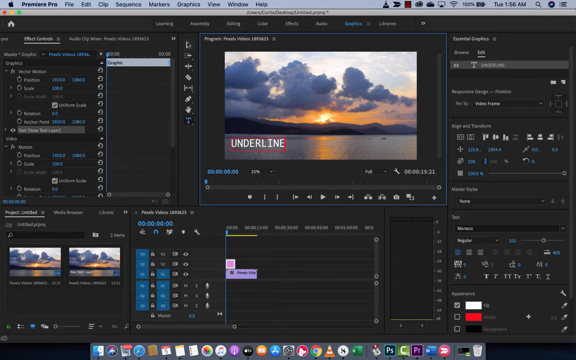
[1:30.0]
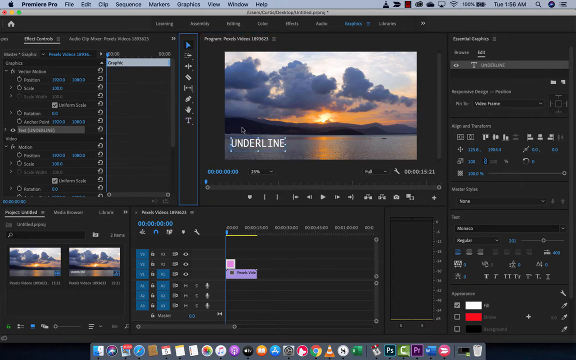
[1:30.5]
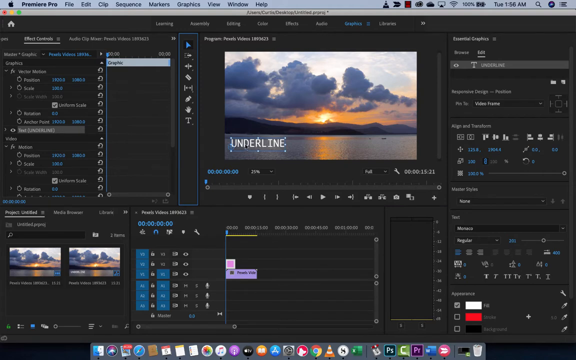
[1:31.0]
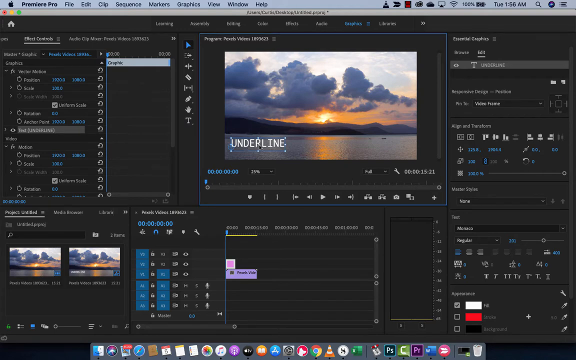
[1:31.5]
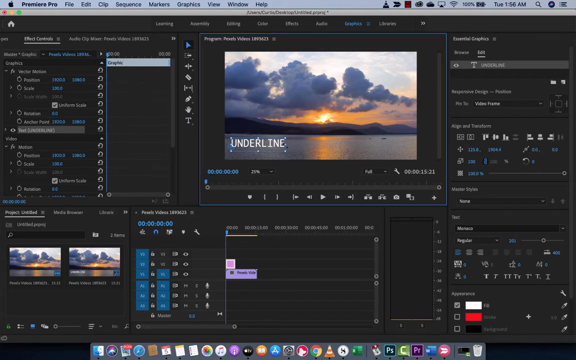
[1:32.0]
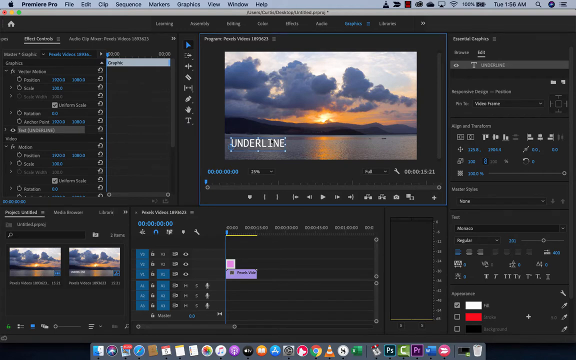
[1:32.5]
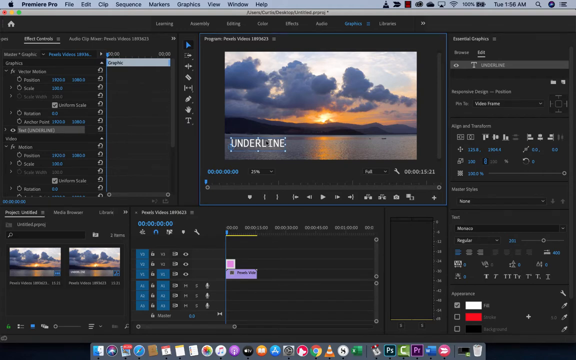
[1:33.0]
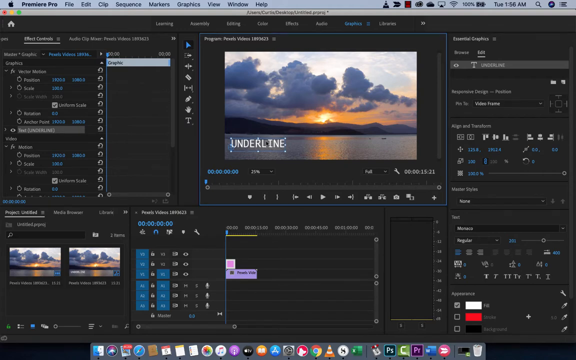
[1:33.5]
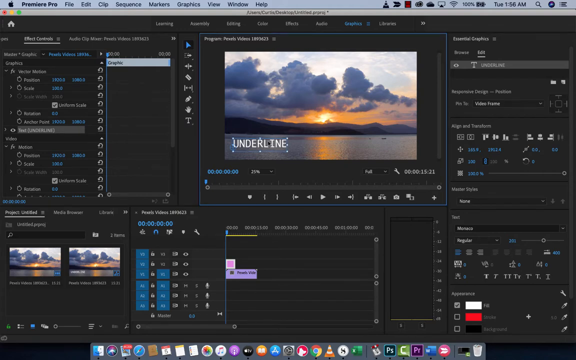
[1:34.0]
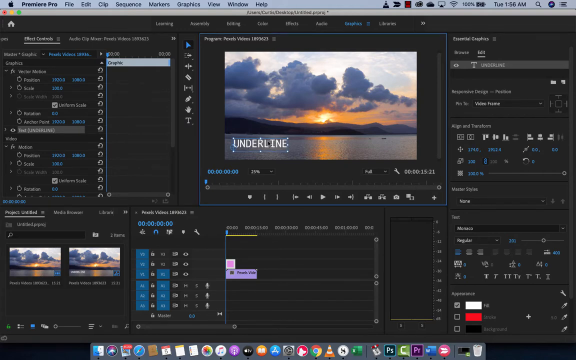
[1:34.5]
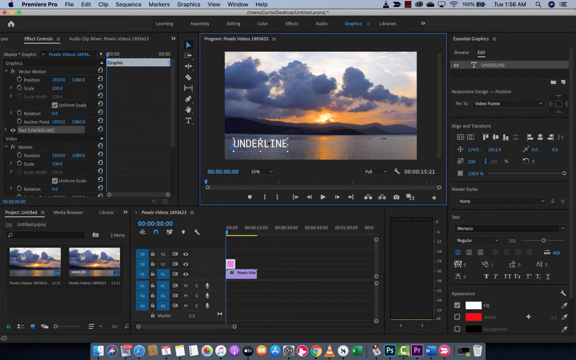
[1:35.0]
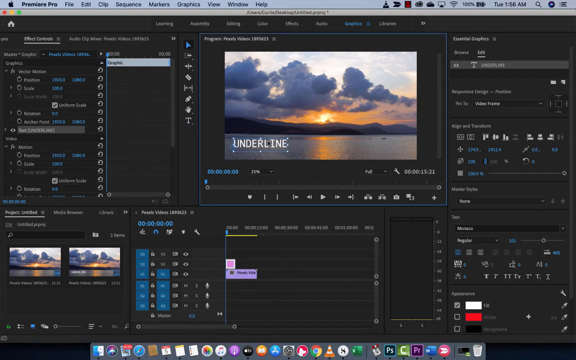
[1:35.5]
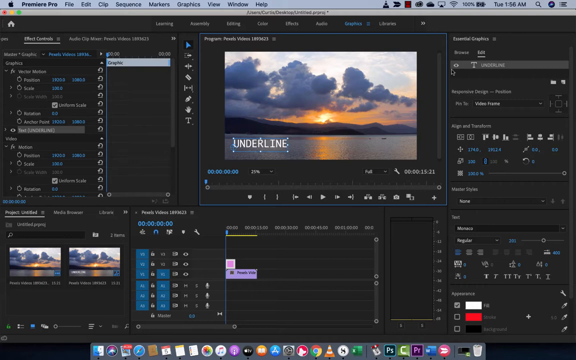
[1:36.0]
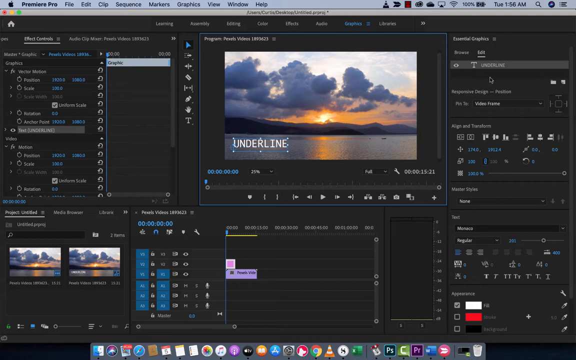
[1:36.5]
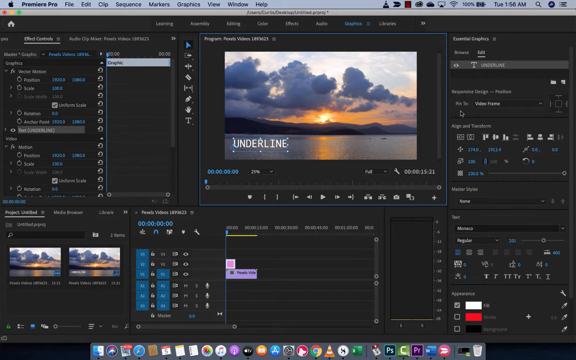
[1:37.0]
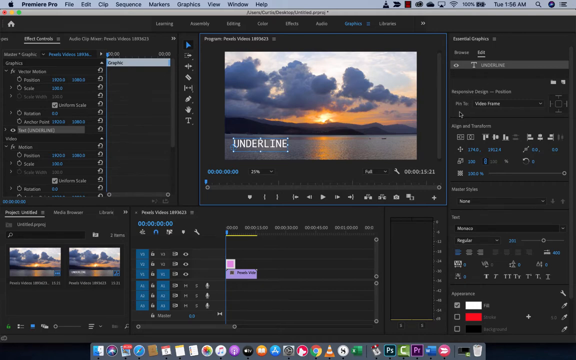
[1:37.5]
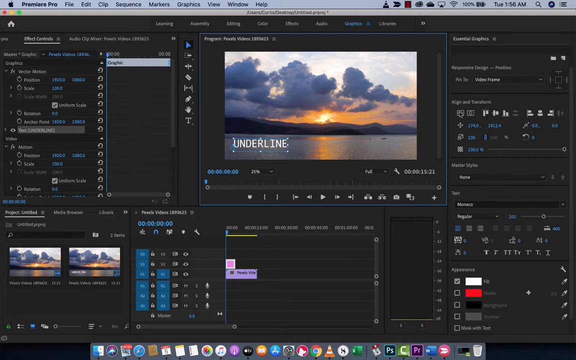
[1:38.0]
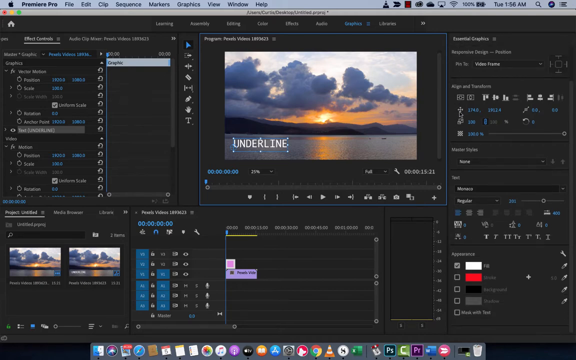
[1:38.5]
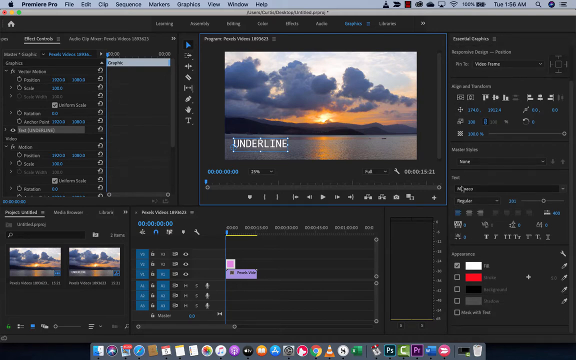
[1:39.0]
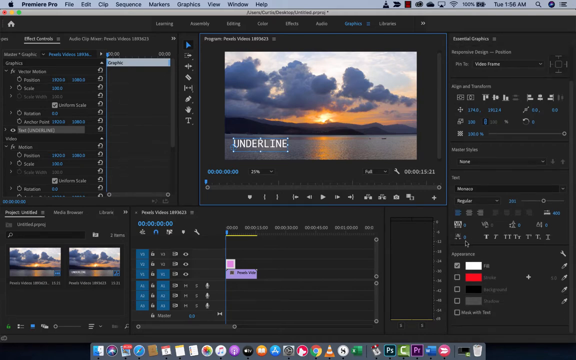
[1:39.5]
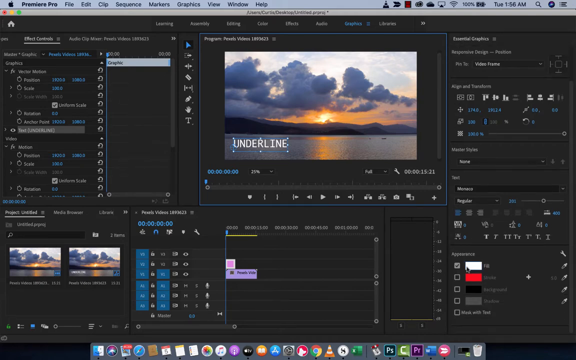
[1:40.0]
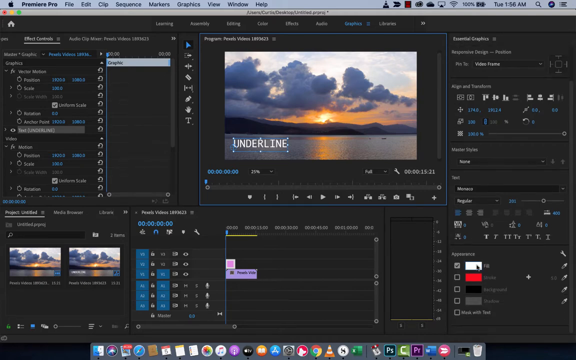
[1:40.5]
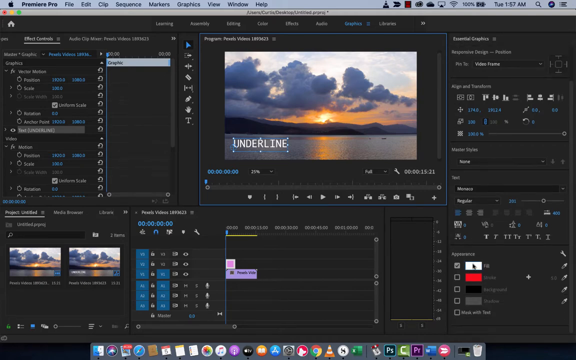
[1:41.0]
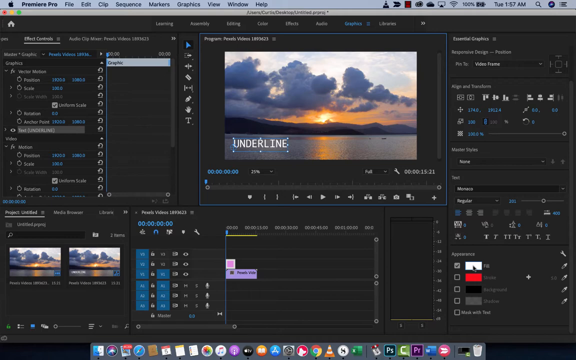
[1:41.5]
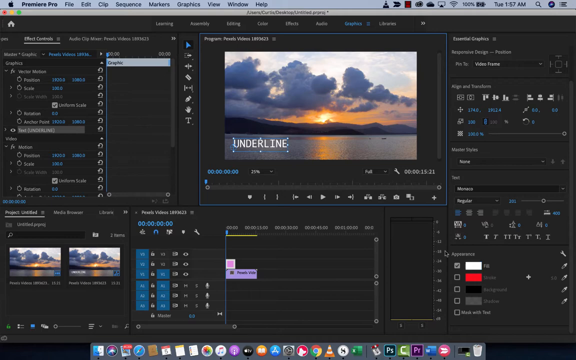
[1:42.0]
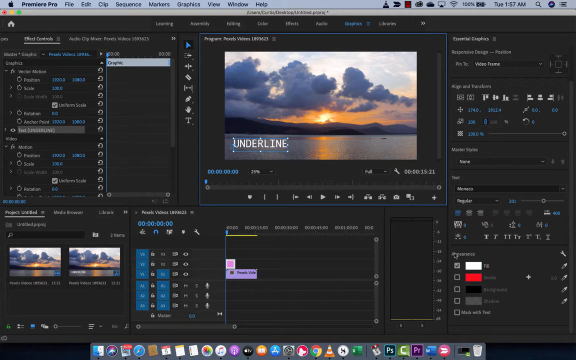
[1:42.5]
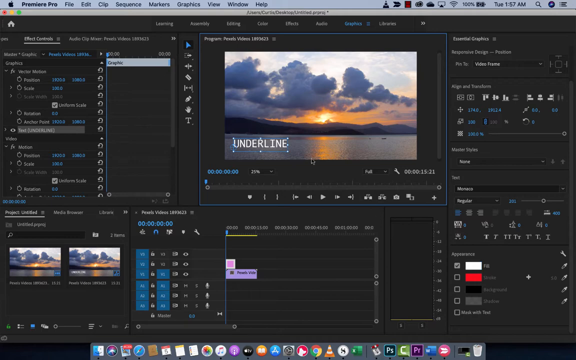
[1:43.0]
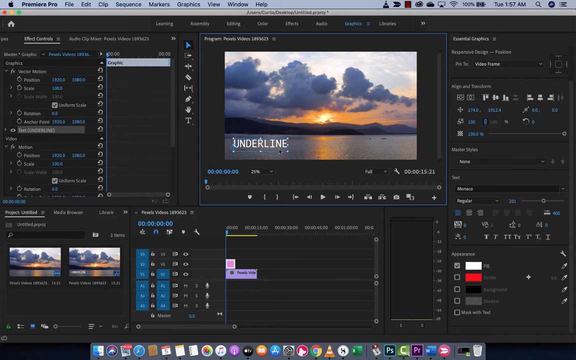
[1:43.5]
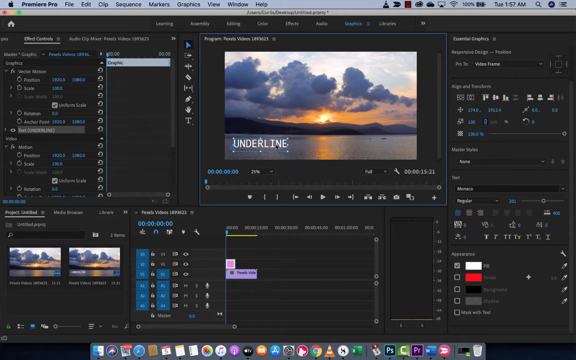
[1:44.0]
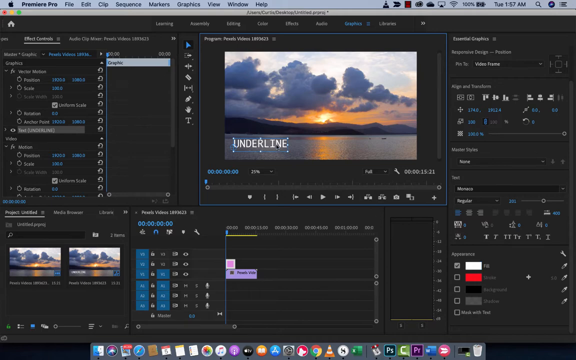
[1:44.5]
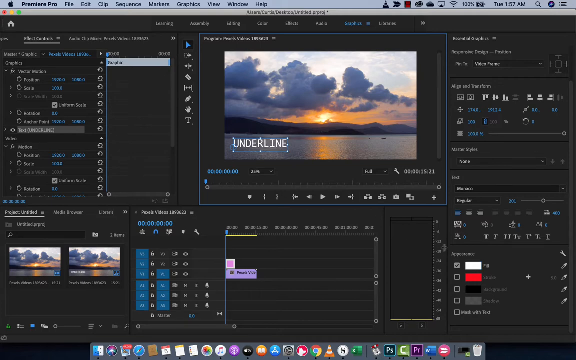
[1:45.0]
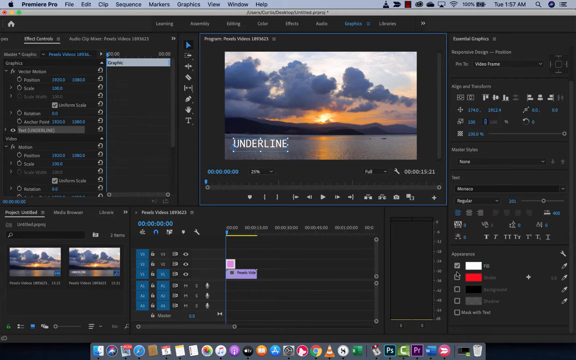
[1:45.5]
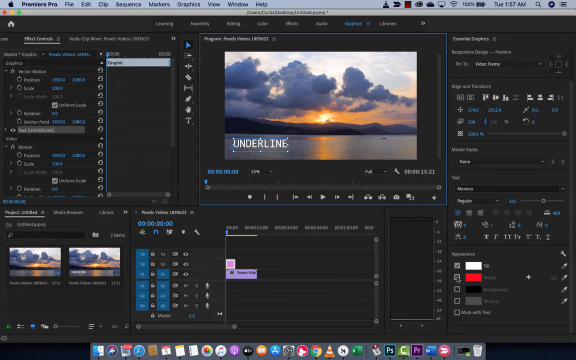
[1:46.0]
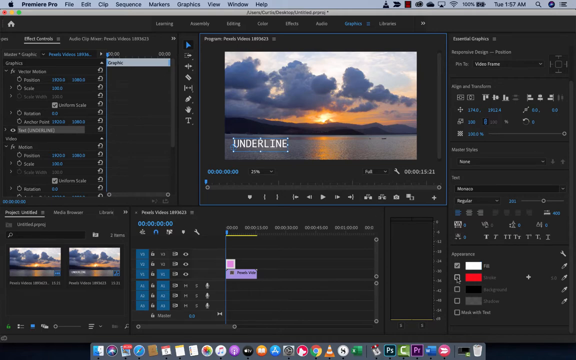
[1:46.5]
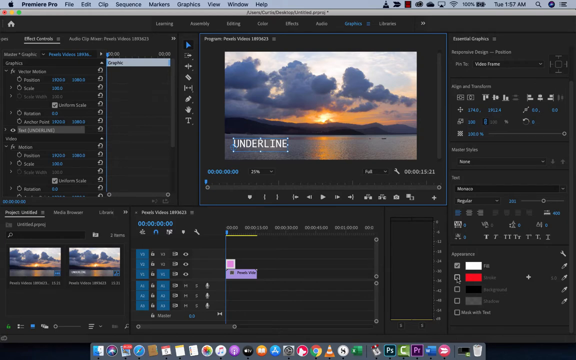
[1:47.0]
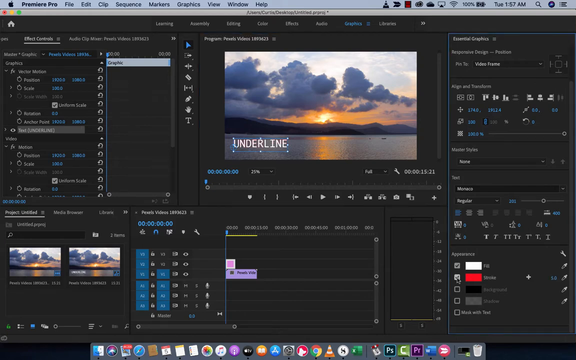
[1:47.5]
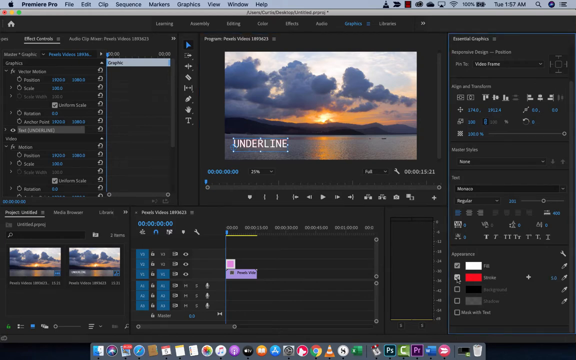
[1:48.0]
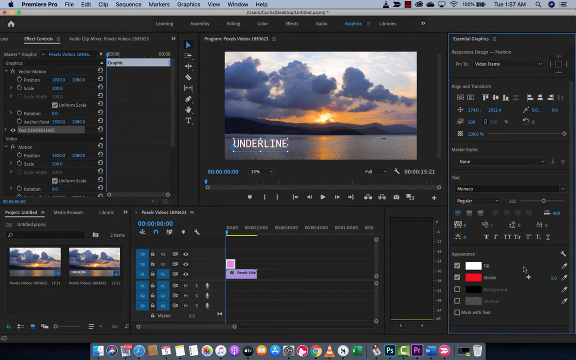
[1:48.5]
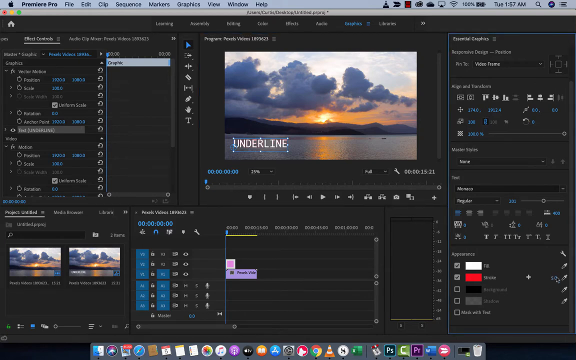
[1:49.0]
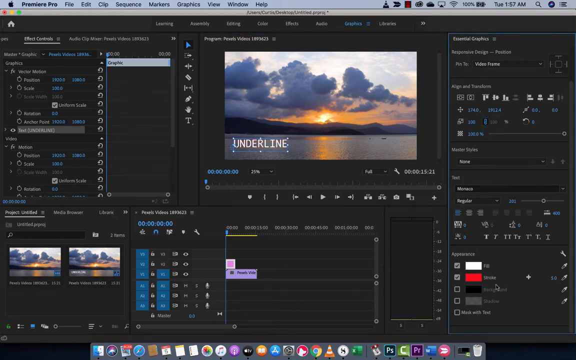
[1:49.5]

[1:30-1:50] A program labeled "Premiere Pro" at the top left shows various editing elements. The main element is an image of a sunset with clouds and water, with the word "underline" in its bottom left. The mouse cursor moves down over the "d" in "underline", and a blue border appears over that entire section. The cursor grabs "underline" and moves it slightly to the right, then goes to the right portion of the screen, over an appearance section, and hovers over a white box. It goes back to the main screen where "underline" is, then back to the color options at the bottom right. It stays mainly on a line with a red box, going back and forth between that box, the box next to it, and what looks like some sort of editing tool beside it.